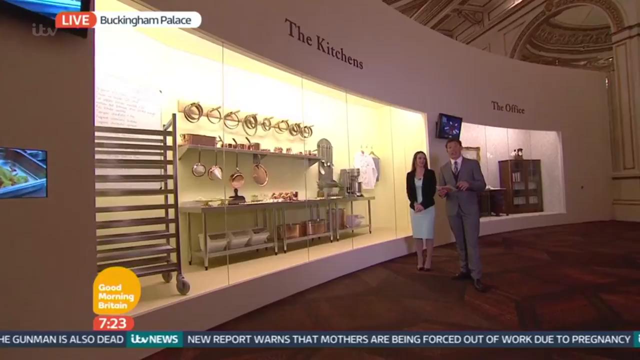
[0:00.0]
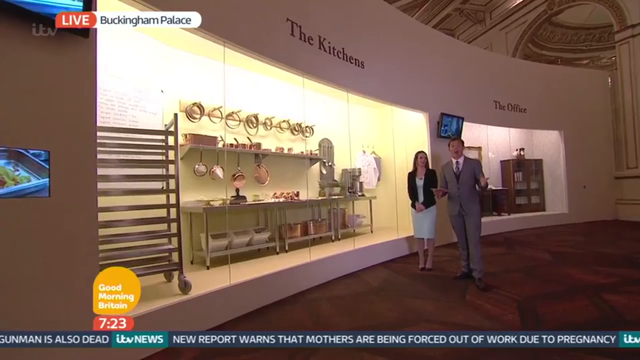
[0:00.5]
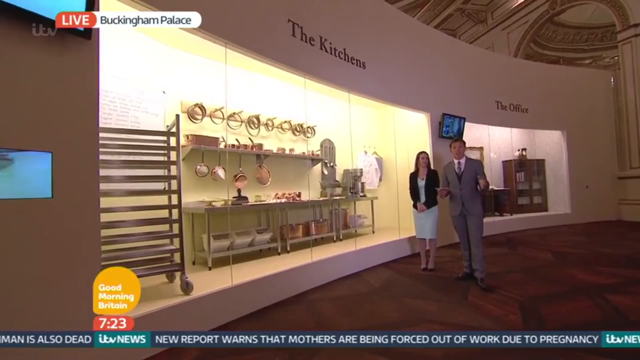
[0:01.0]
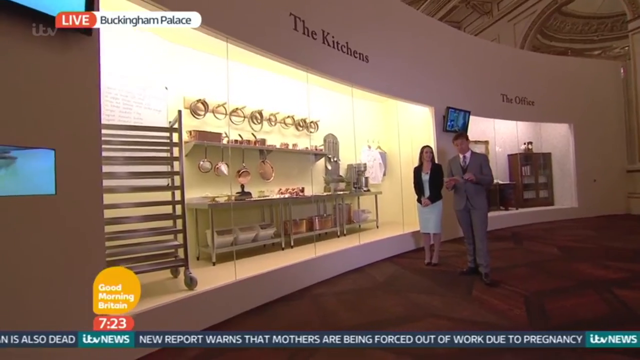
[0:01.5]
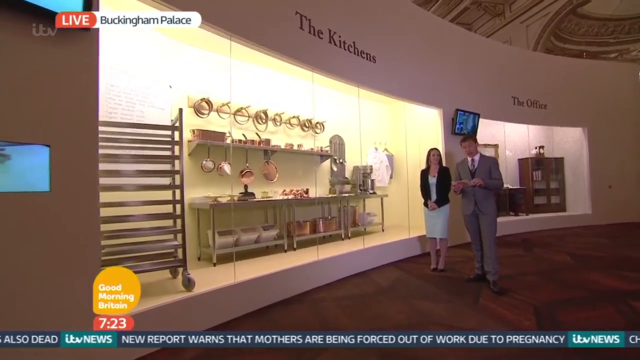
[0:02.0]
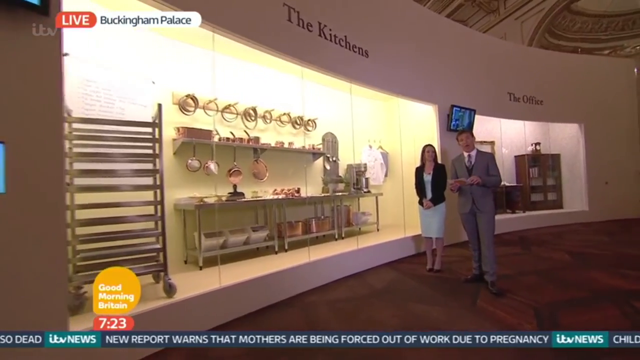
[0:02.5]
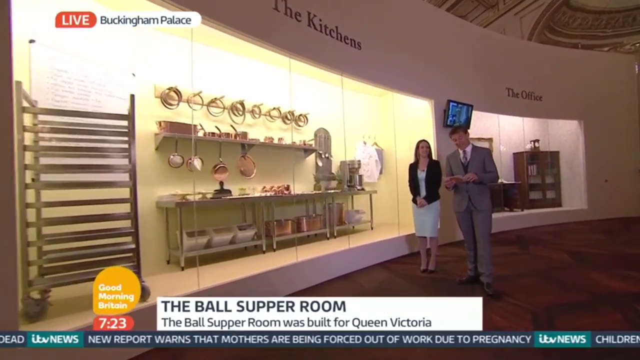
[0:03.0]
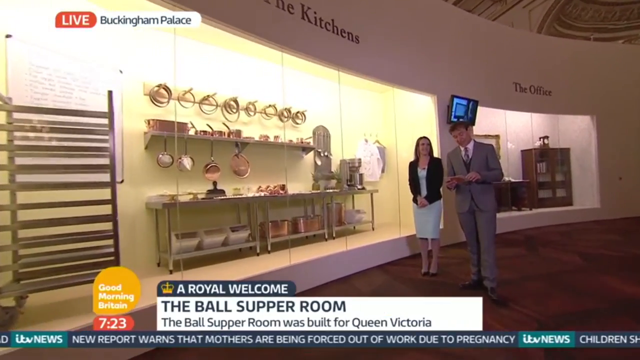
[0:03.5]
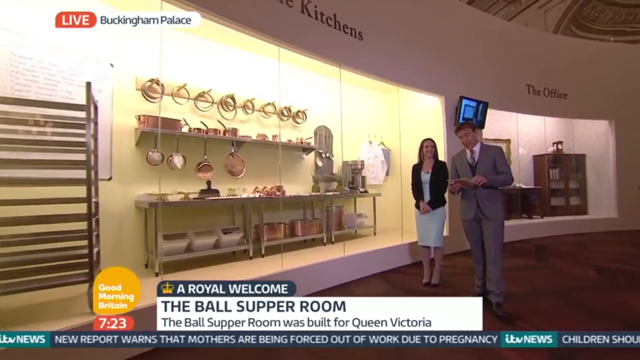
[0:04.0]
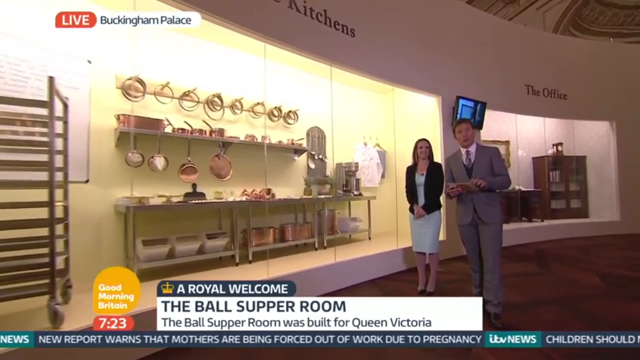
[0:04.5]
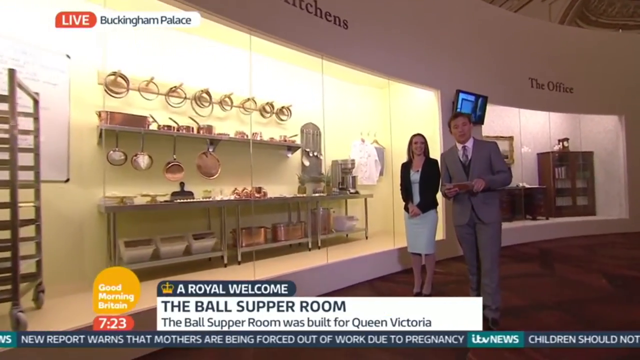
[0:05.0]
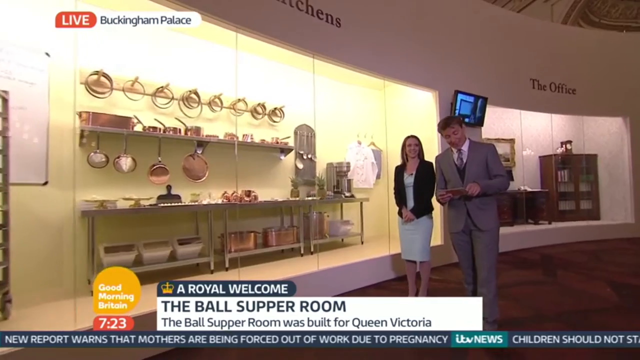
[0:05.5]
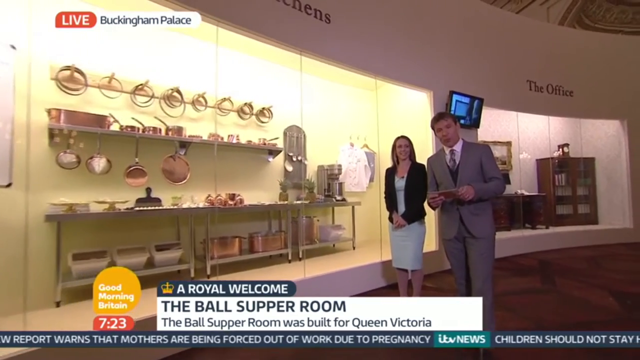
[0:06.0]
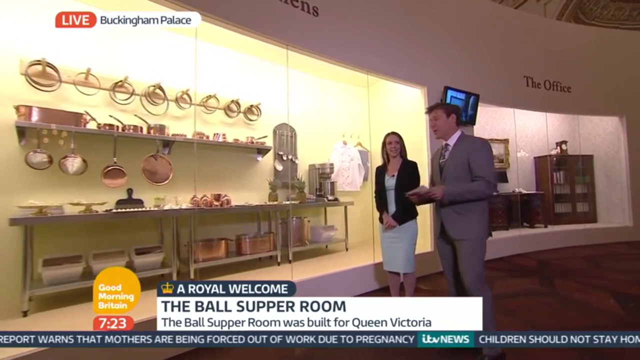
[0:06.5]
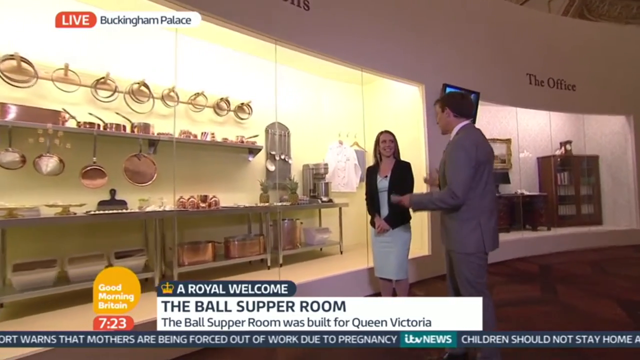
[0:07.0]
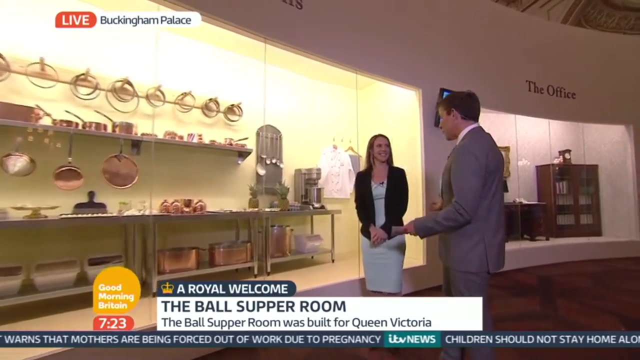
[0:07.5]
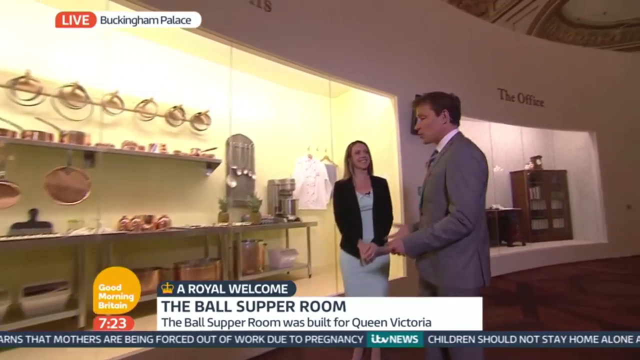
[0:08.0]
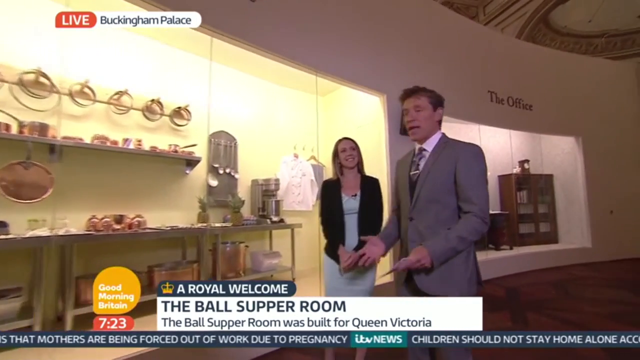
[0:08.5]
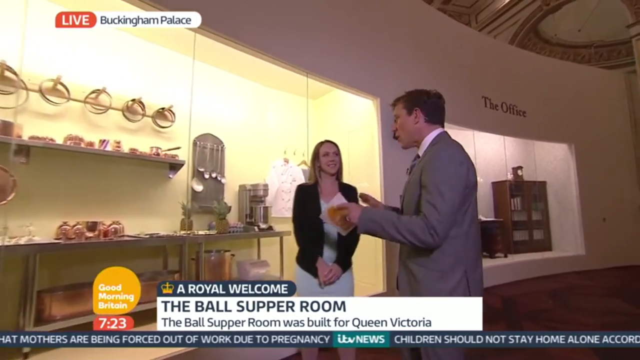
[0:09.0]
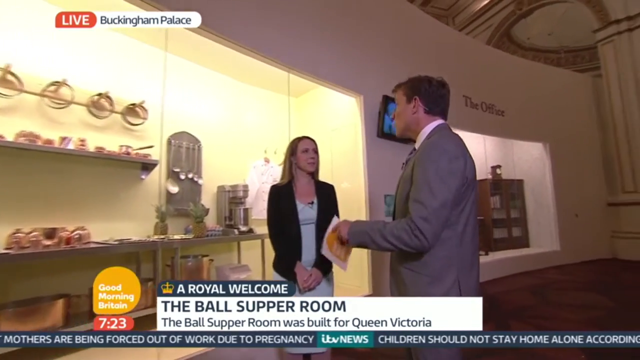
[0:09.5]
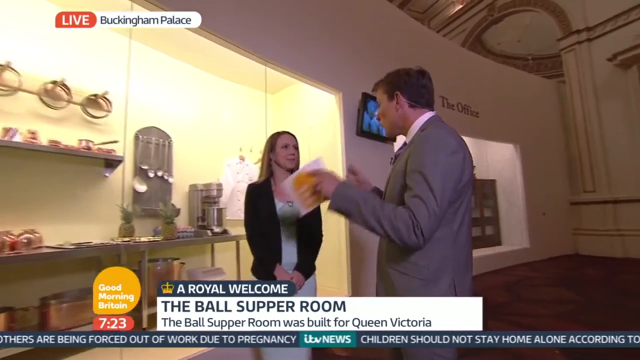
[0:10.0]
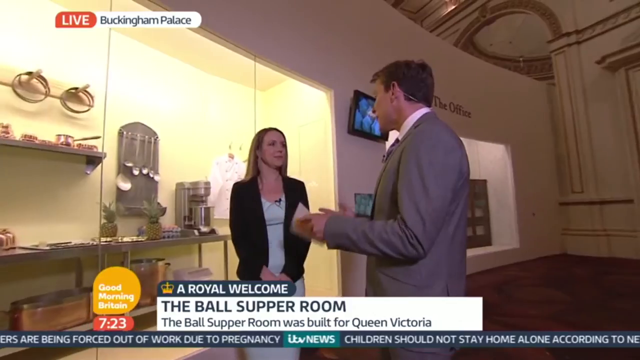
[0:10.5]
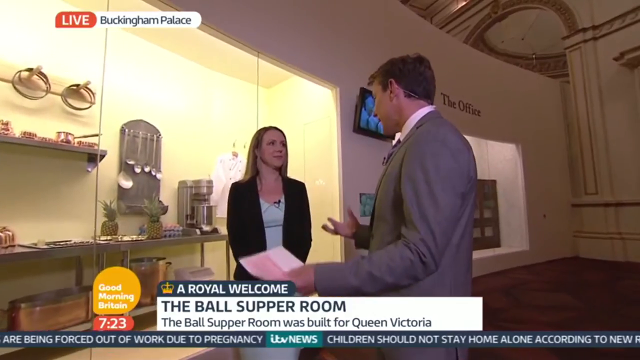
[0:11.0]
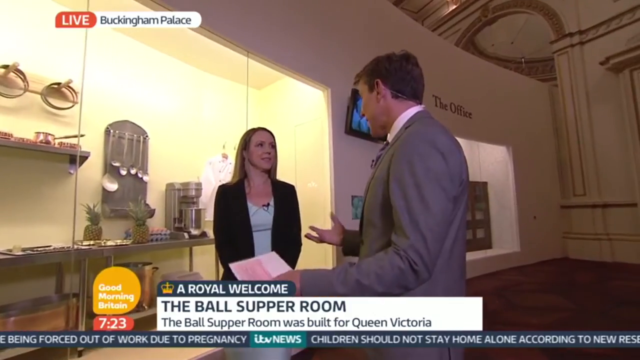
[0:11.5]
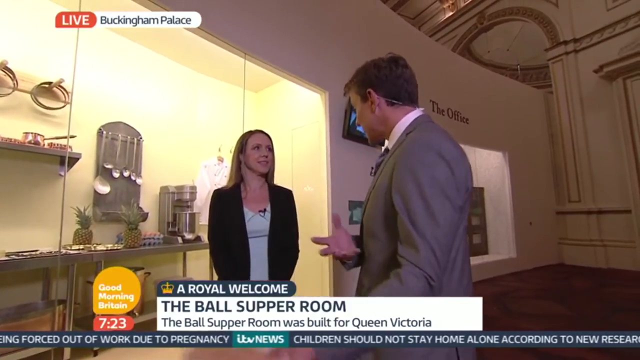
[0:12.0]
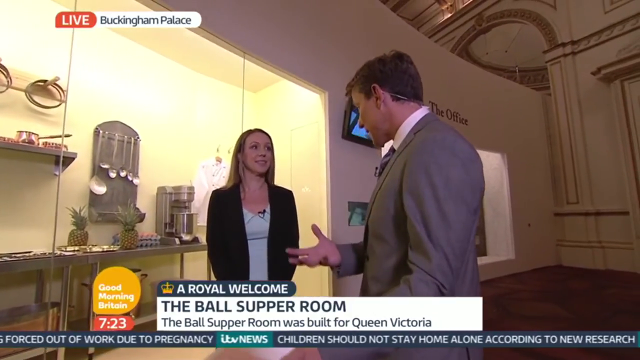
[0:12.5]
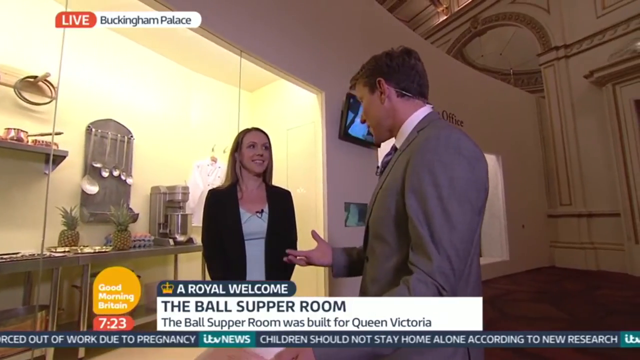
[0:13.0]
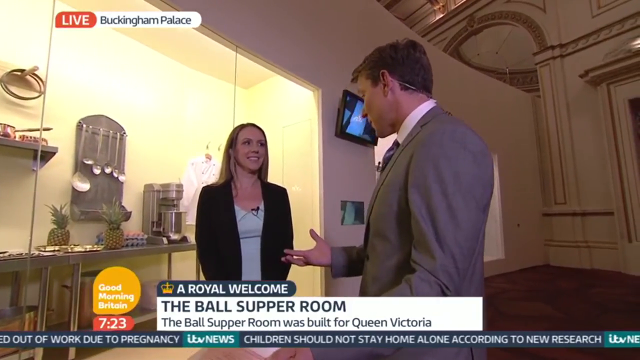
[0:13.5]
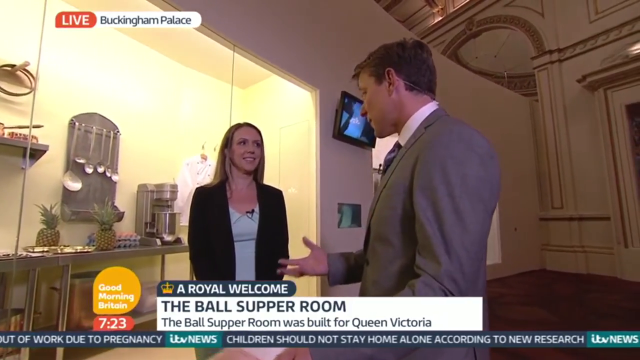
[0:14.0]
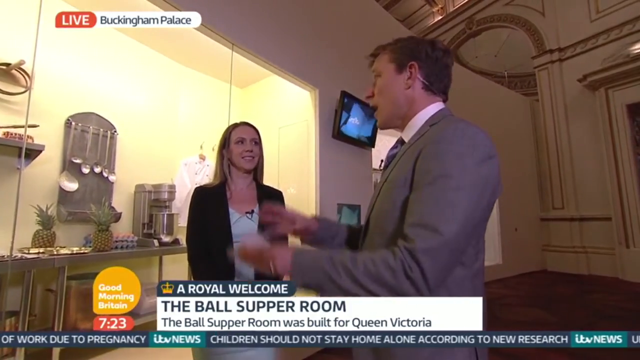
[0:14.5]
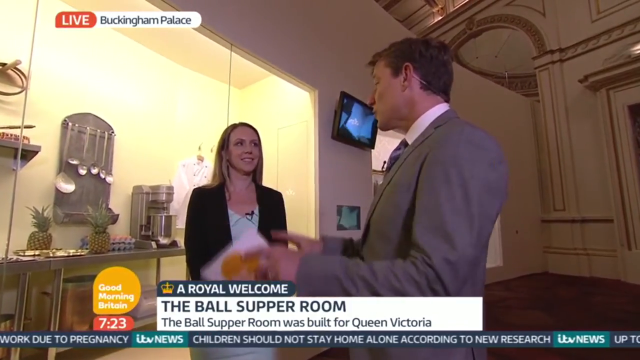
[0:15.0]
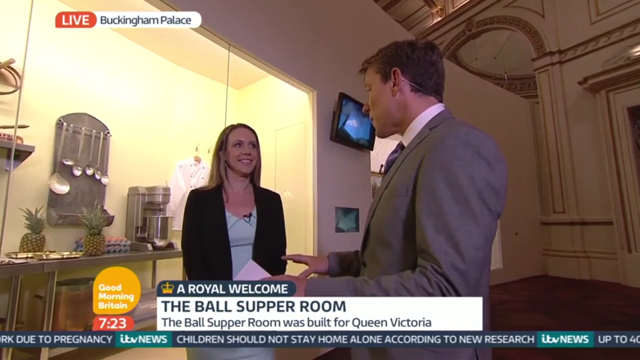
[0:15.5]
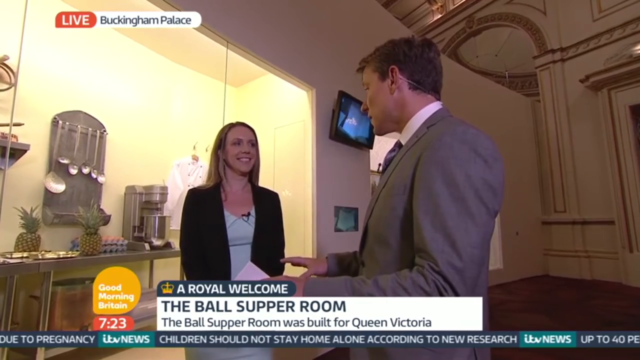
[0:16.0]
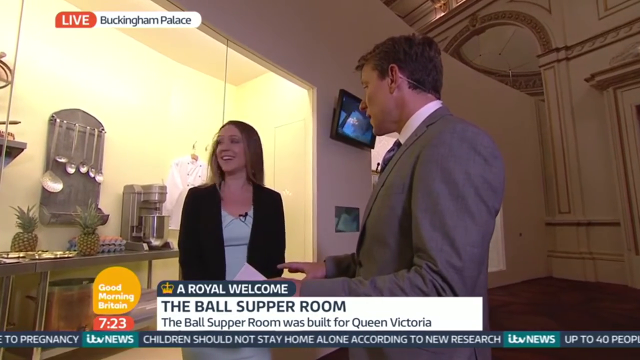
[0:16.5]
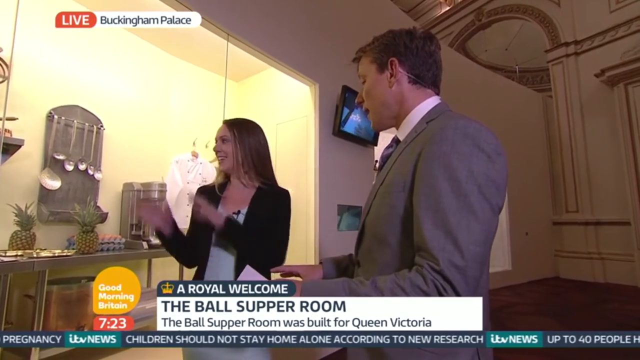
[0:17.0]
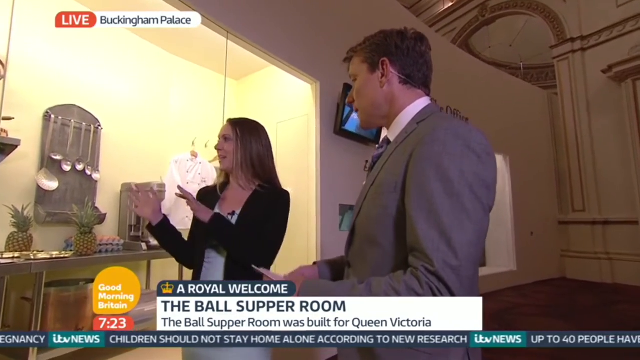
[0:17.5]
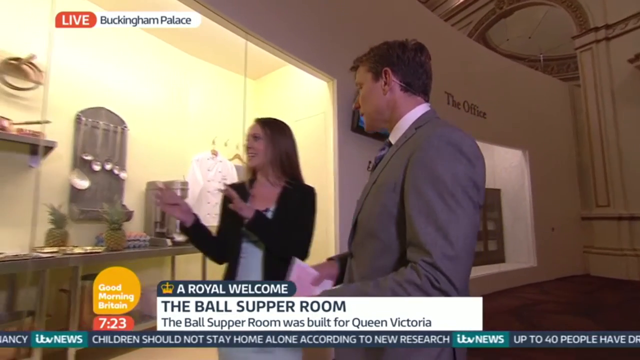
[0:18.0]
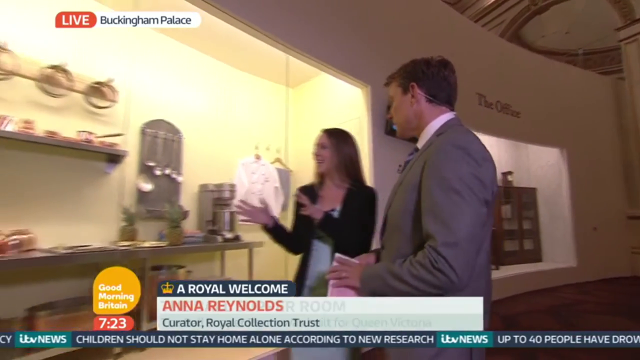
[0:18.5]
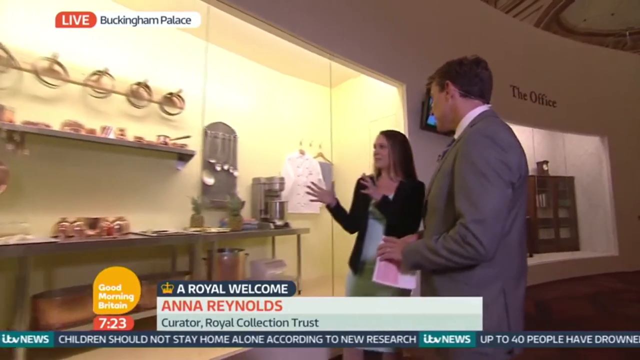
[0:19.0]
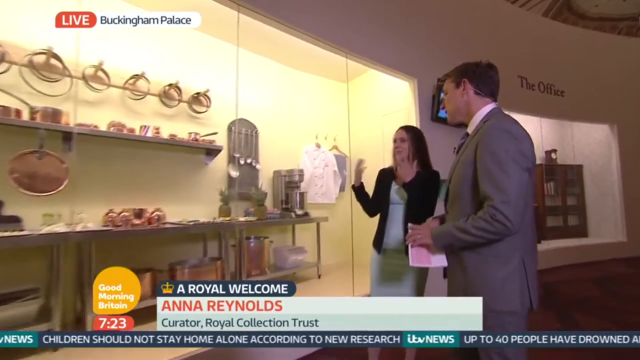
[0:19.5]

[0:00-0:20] A news segment opens with a man in a gray suit, white shirt and black tie standing to the right of a woman in a white dress with a black coat over it. In the bottom left is an emblem for Good Morning Britain in an orange balloon, and the time "7:23" appears in a red bubble. The two stand in front of a curved white wall; on its top left is the title "The Kitchens" and on its right side "The Office", and these titles are above a museum exhibit. Under "The Kitchens" is a metal table with pans hanging over the top of it, and on the left is a metal tray on wheels. The shot starts zoomed out and then zooms in on the man and woman. The man is talking, holding a card with both hands; he looks at the card and reads, then looks up at the camera. He turns to his right, raises his right hand with the palm toward the ceiling, holds the card in his left hand, and begins talking to the woman beside him. The woman turns to her left toward the man and talks to him. With the camera zoomed in on them as they talk, the man lifts both hands so the palms face each other and gestures, points his hands forward, then lowers his left hand and raises his right hand palm up, slightly clenching it as he talks. He brings his hands together, rests them down in front of him, and claps his hands together.